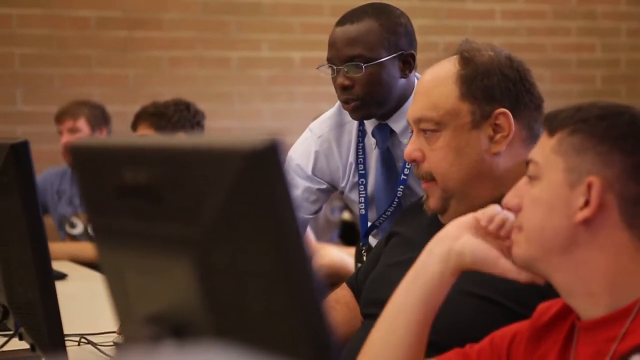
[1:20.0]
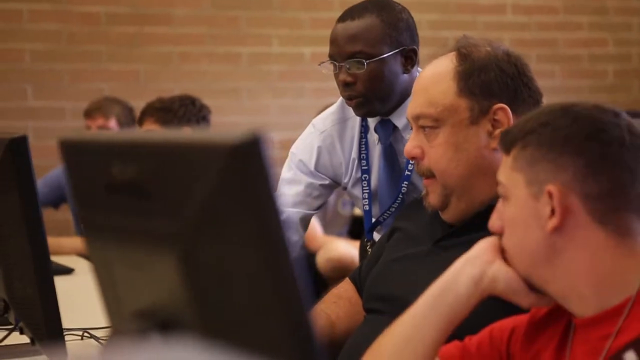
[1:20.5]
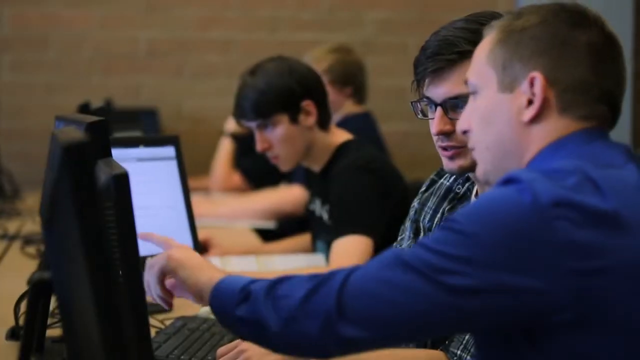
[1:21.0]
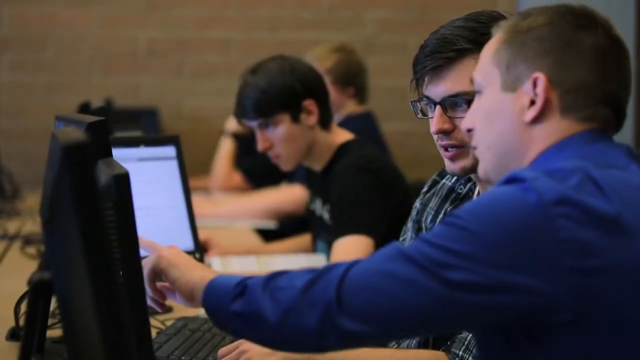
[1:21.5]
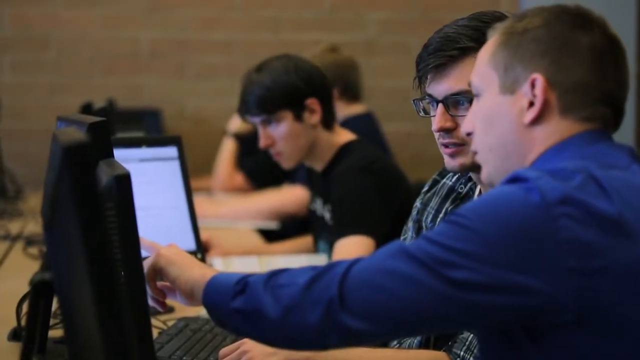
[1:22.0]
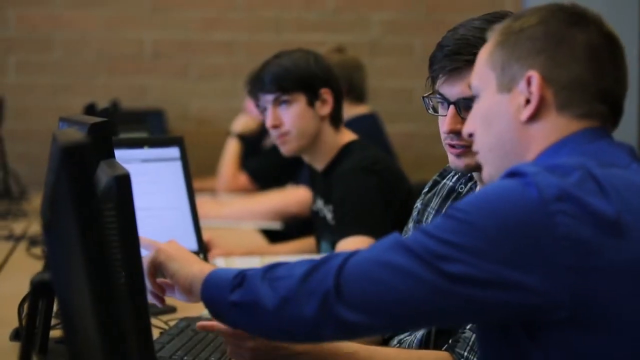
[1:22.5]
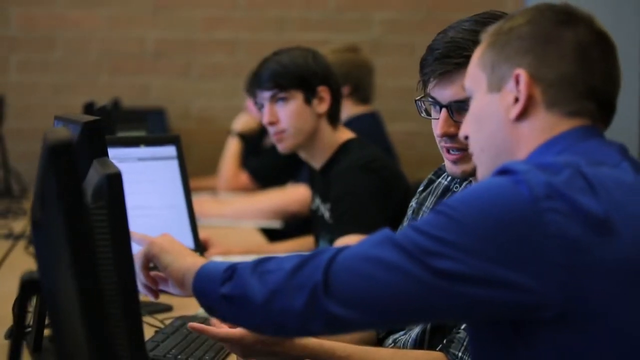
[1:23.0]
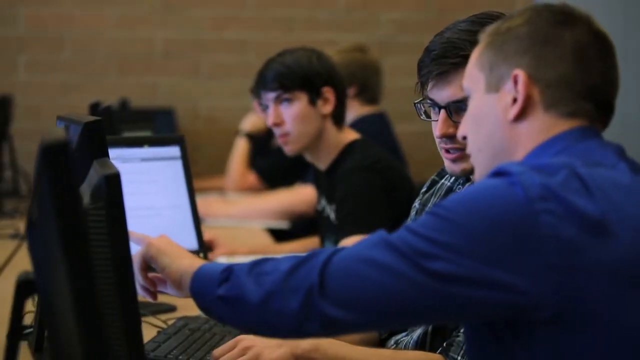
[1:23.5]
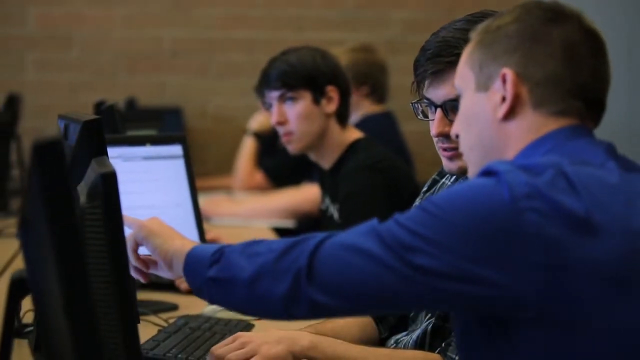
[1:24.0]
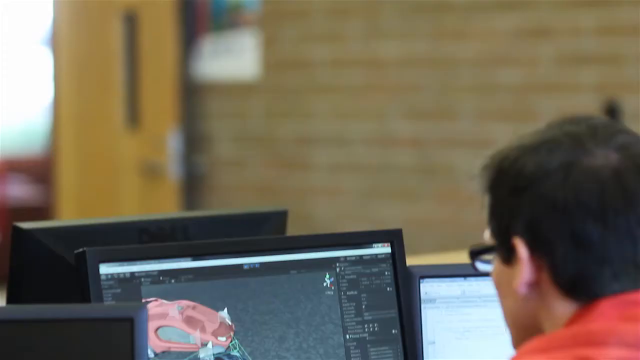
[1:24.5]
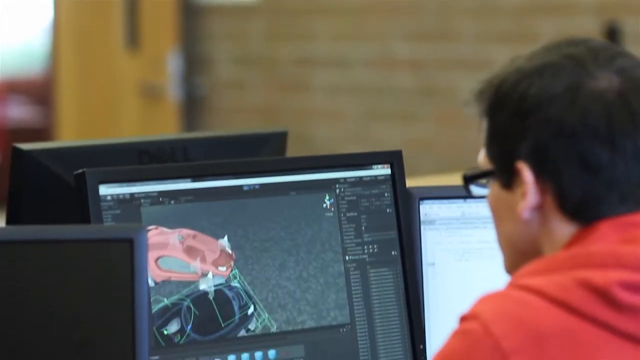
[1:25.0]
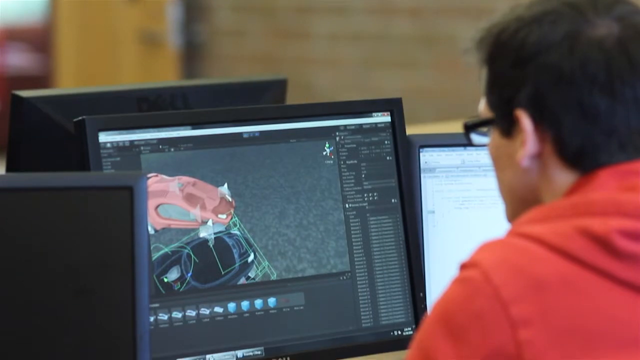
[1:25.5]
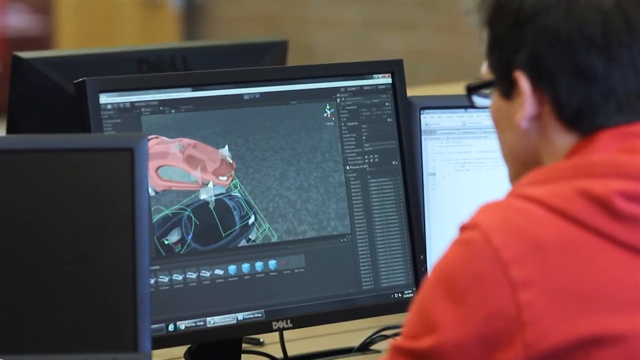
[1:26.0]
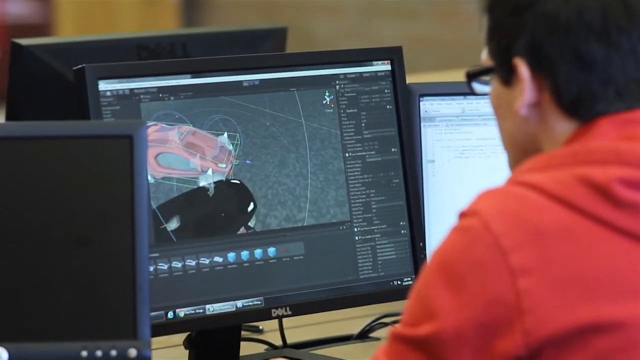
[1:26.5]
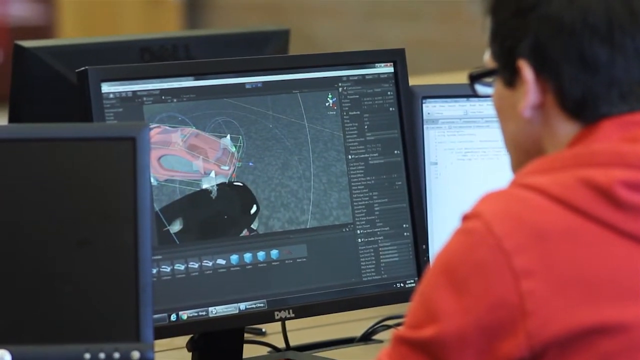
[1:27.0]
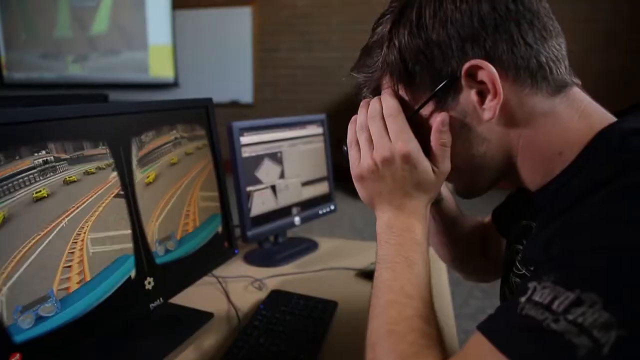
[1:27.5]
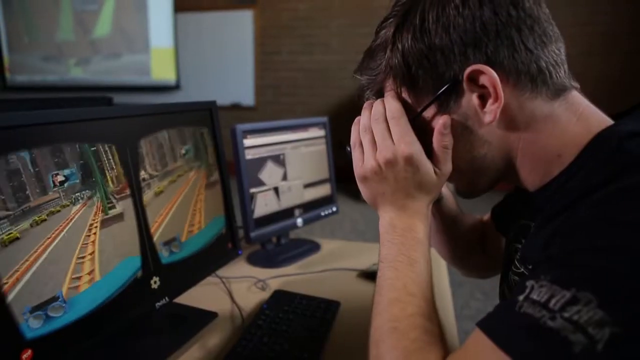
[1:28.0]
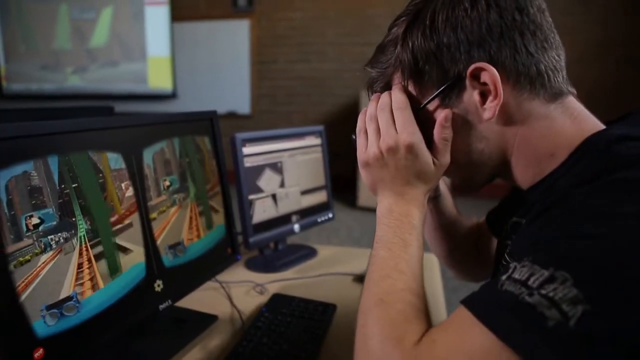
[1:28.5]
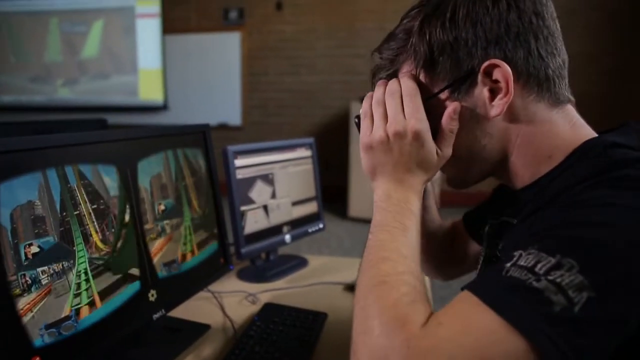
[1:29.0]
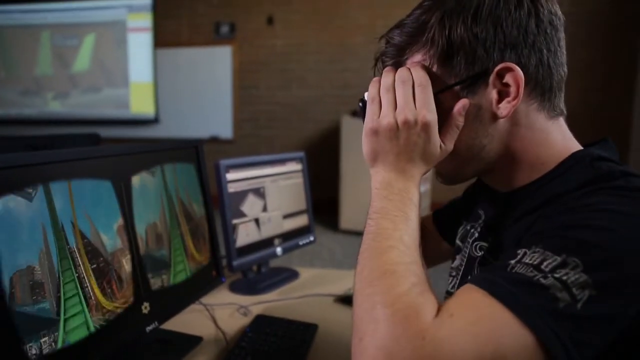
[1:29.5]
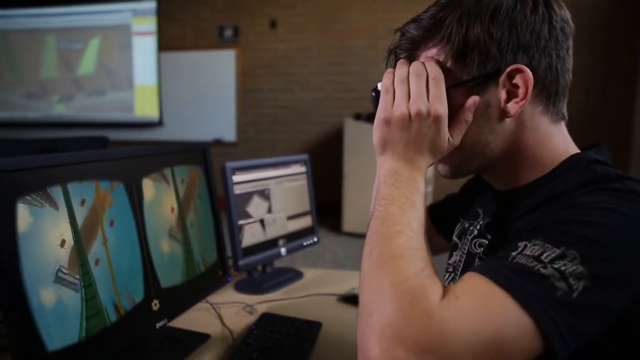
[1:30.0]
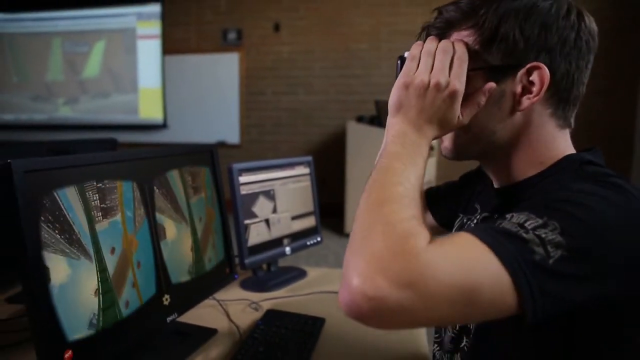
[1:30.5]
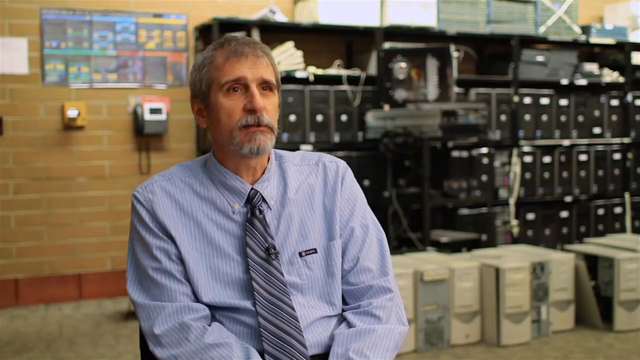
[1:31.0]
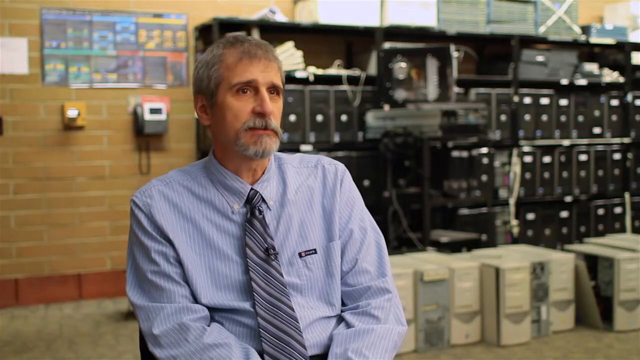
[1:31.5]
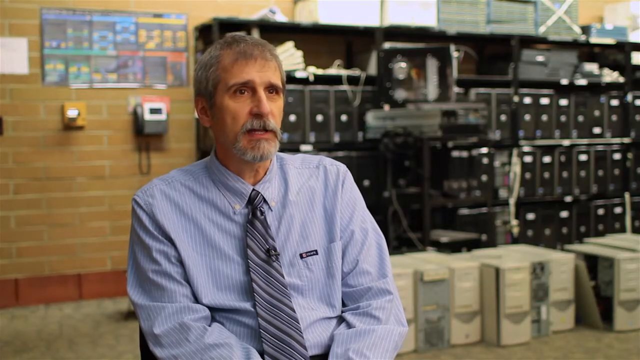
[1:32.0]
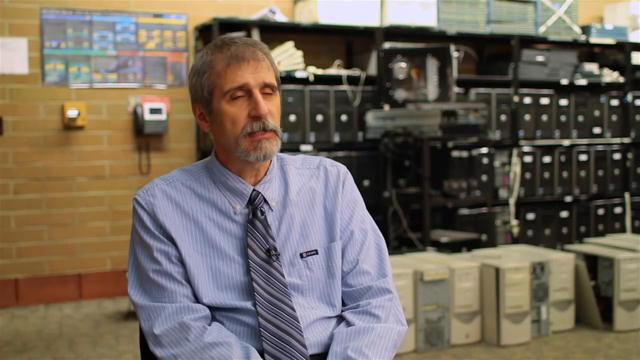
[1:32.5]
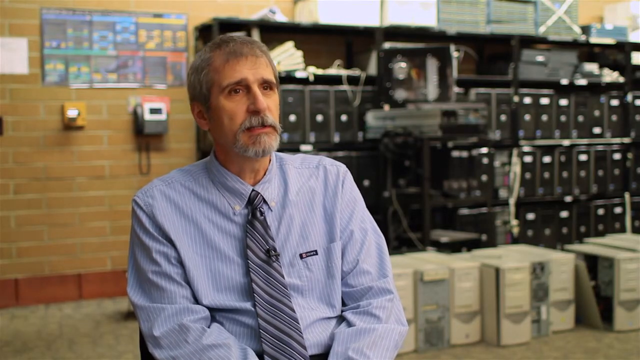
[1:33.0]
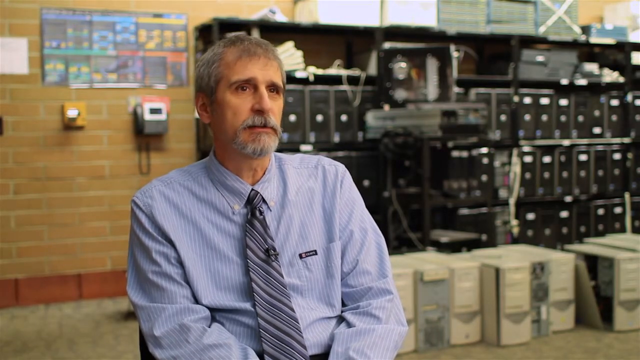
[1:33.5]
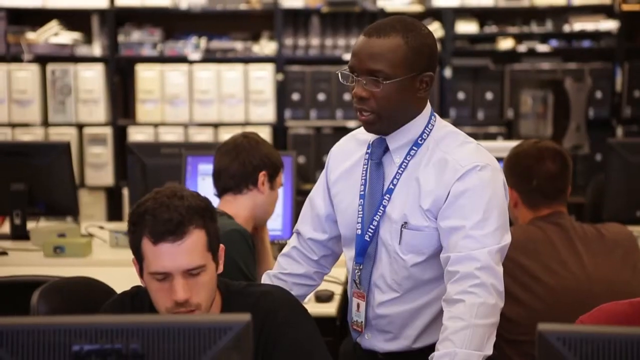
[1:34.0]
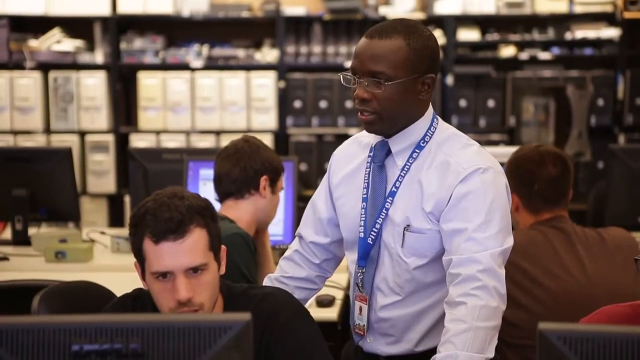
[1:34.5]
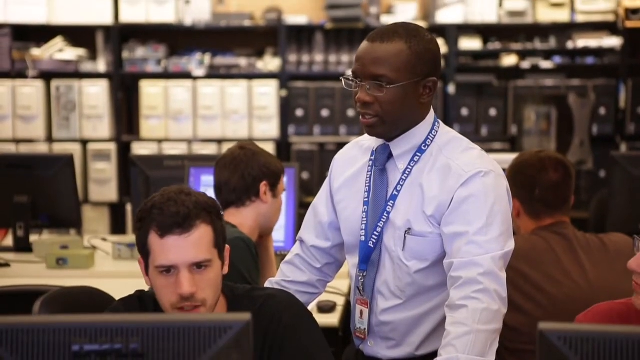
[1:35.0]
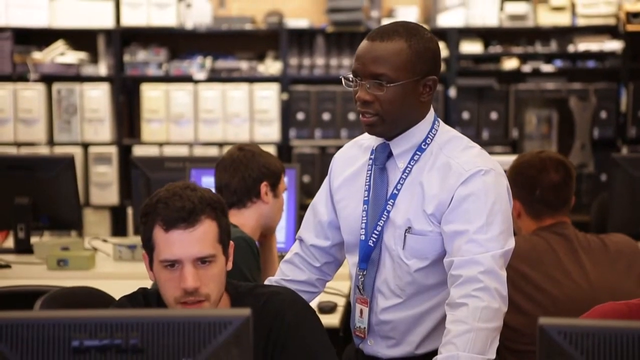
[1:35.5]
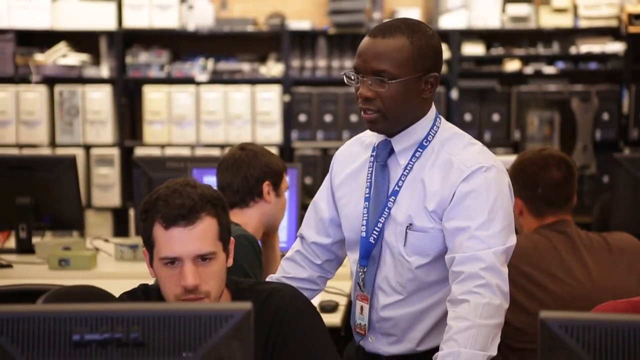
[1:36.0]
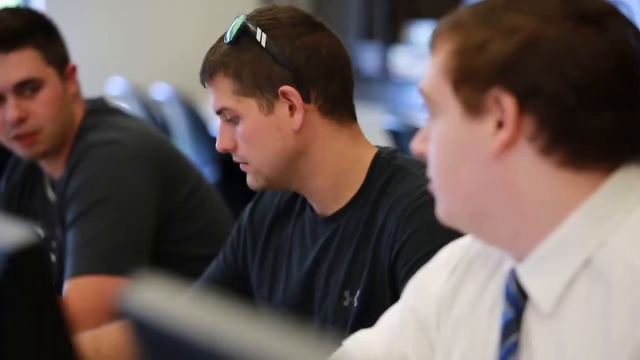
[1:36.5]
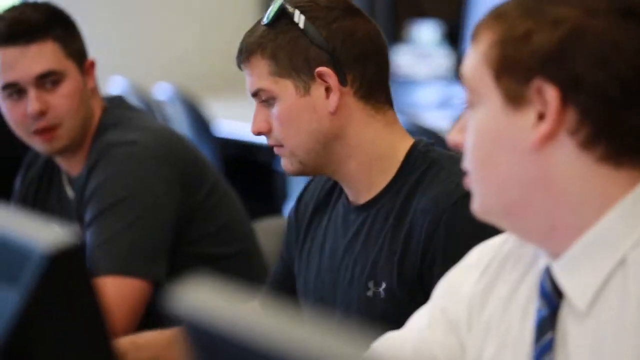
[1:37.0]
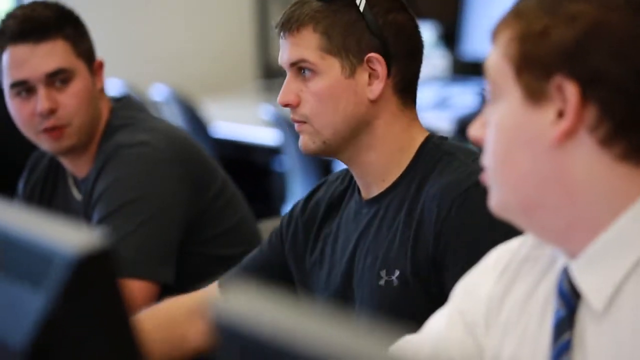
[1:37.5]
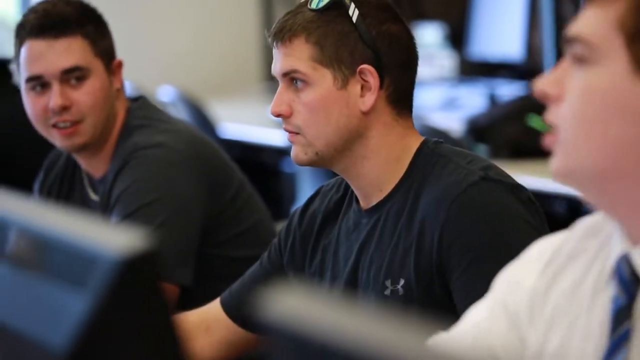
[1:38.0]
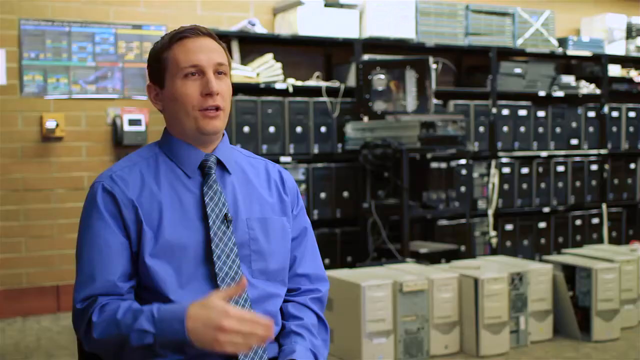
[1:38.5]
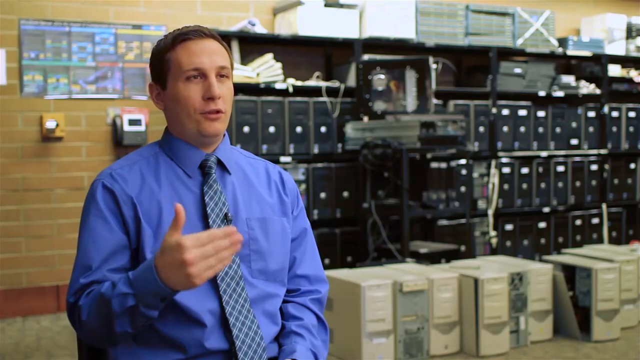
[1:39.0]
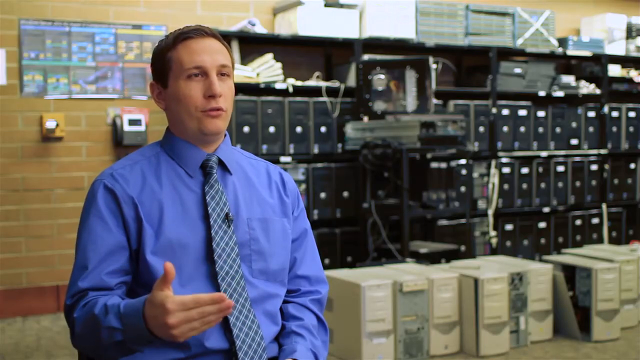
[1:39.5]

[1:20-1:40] Classroom settings with computers continue, showing students programming different video games and other things. One of them appears to wear special goggles, holding a hand on either side of them while looking at two identical screens, with the goggles apparently following the action, possibly for virtual reality programming. Roger appears again, then the other instructor in the white button-down shirt helps people, followed by more students at computers. Many similar shots show students and instructors working together, with a lot of pointing at computer screens; most of the work looks like video games. Most of the students appear to be young men, with one or two women.